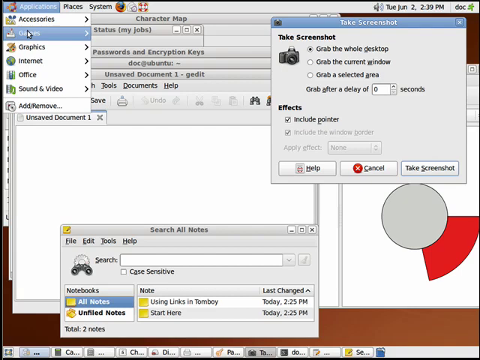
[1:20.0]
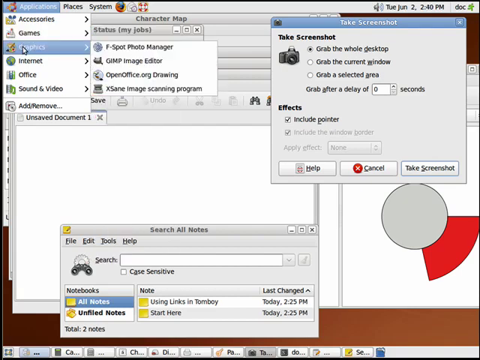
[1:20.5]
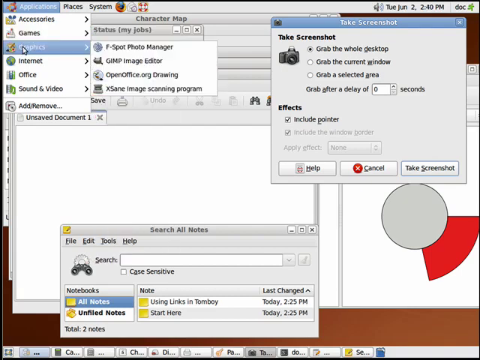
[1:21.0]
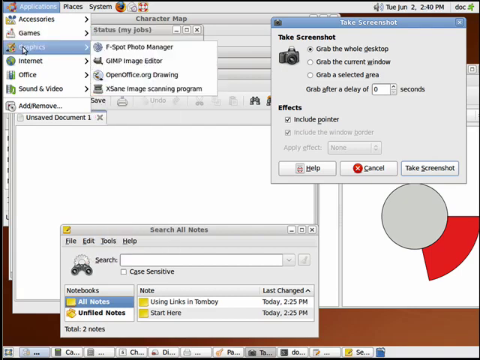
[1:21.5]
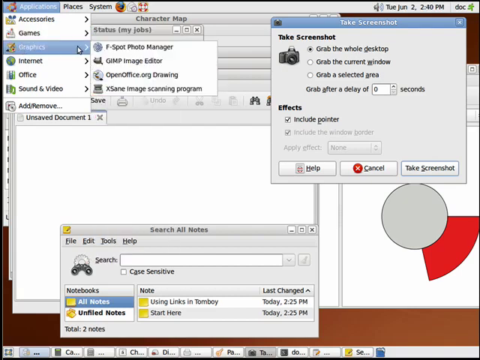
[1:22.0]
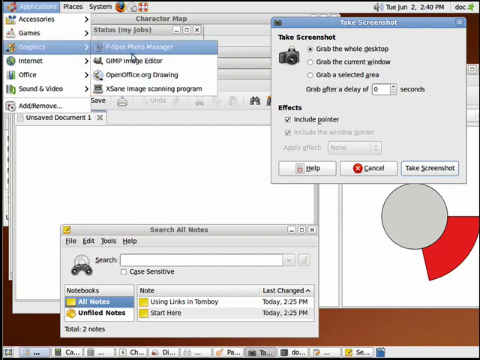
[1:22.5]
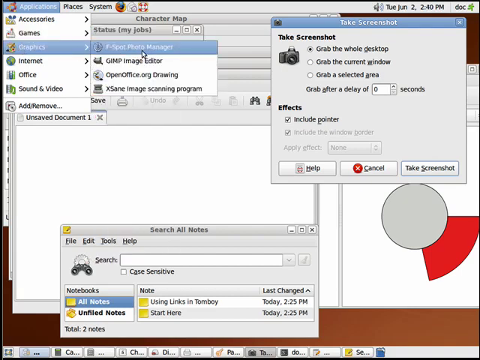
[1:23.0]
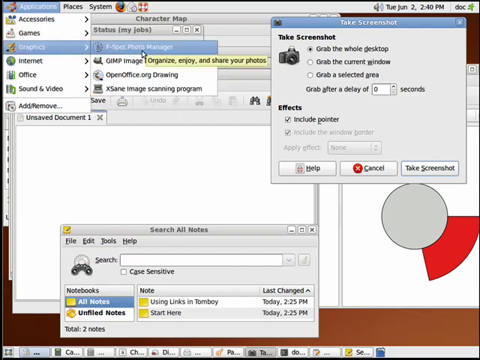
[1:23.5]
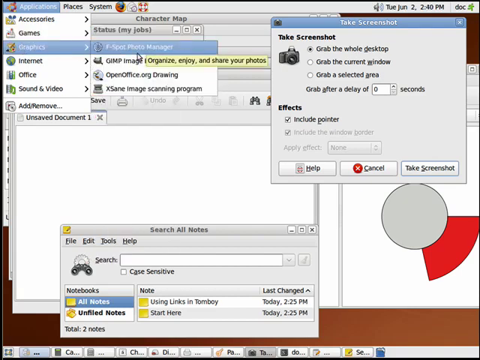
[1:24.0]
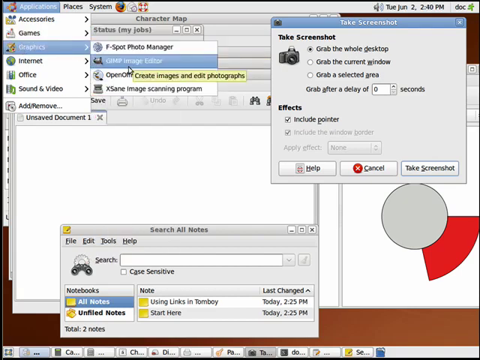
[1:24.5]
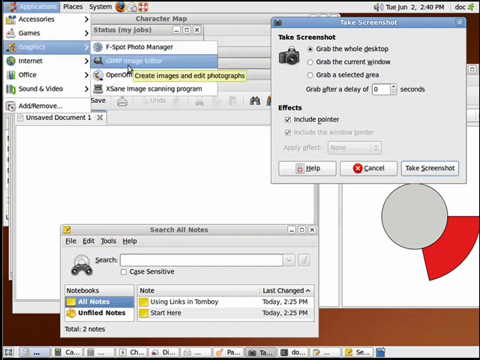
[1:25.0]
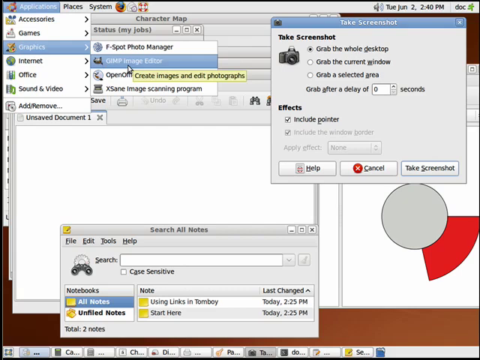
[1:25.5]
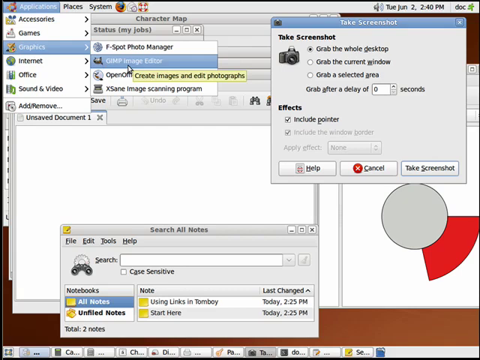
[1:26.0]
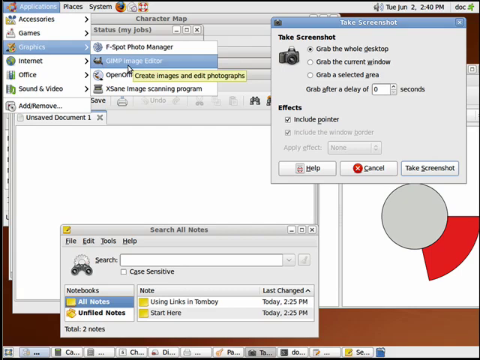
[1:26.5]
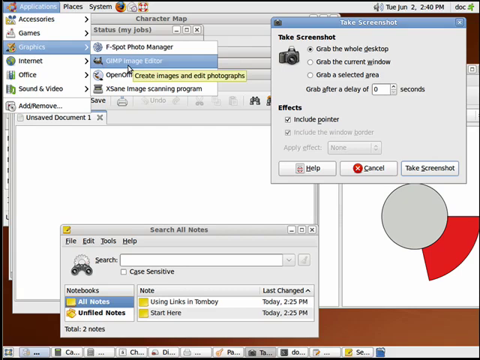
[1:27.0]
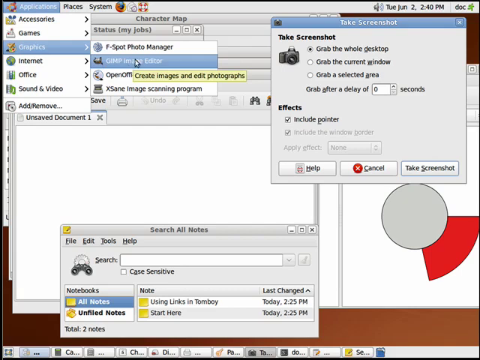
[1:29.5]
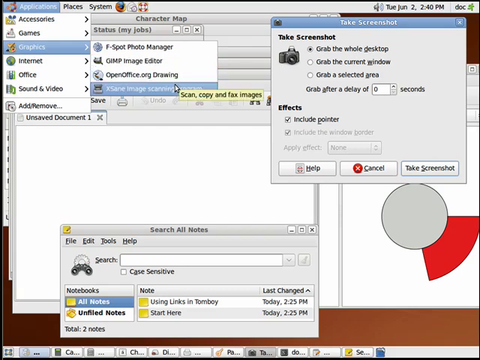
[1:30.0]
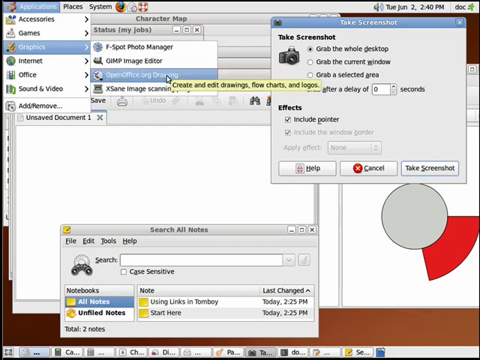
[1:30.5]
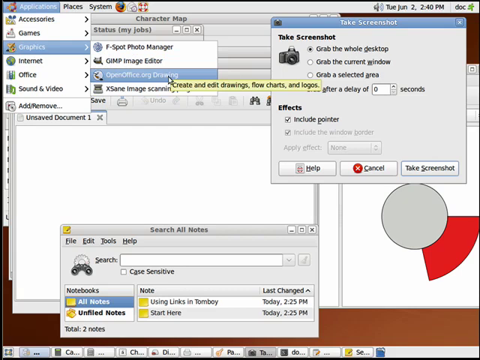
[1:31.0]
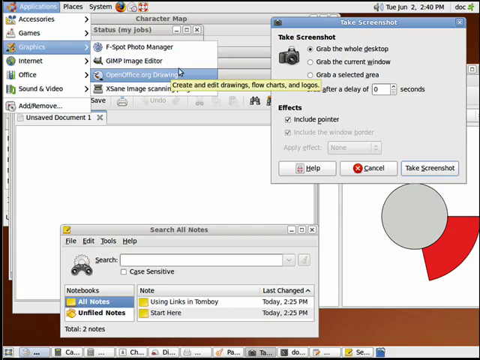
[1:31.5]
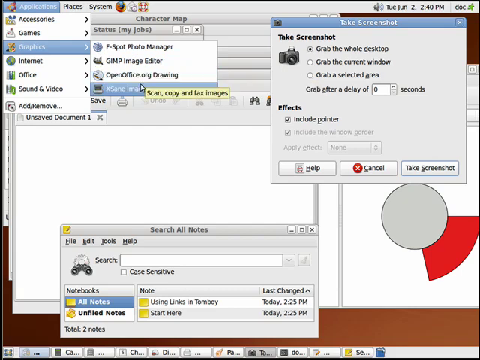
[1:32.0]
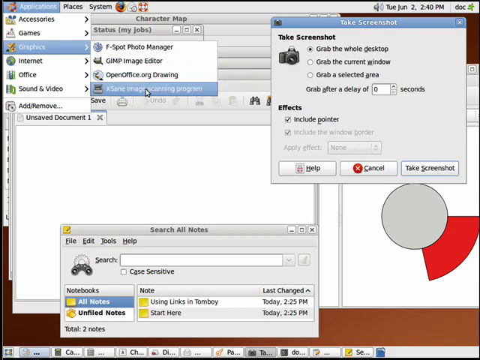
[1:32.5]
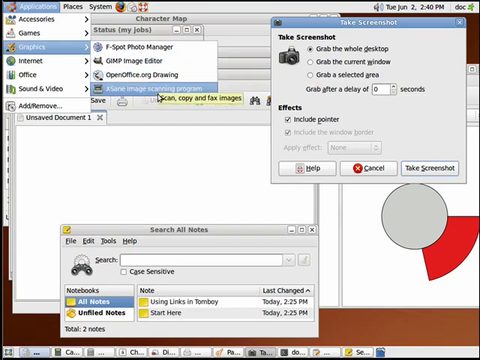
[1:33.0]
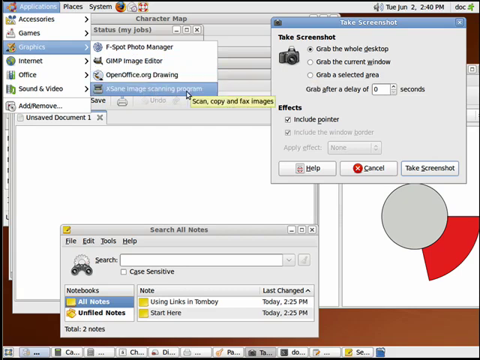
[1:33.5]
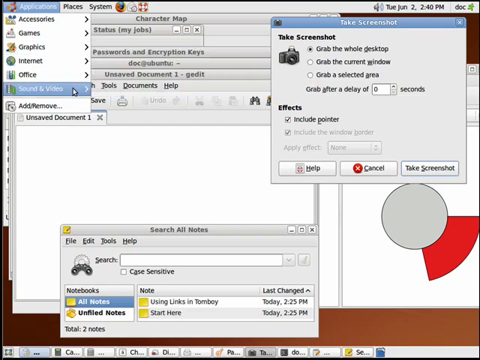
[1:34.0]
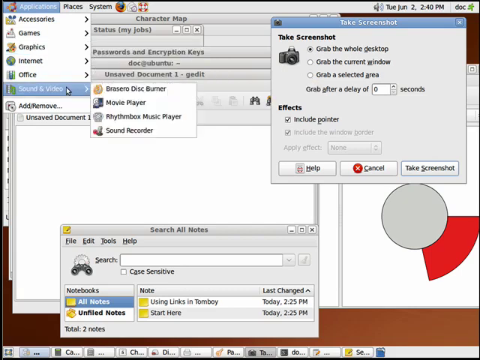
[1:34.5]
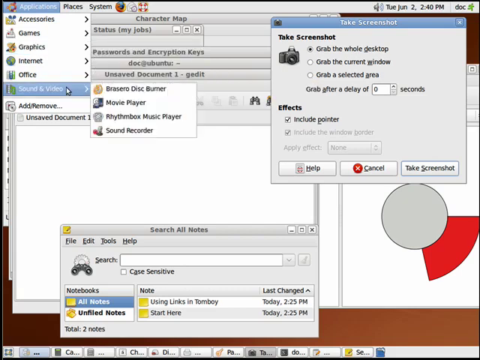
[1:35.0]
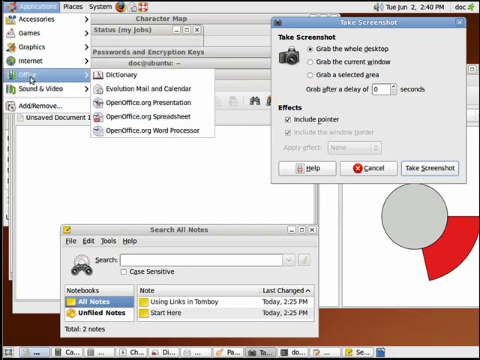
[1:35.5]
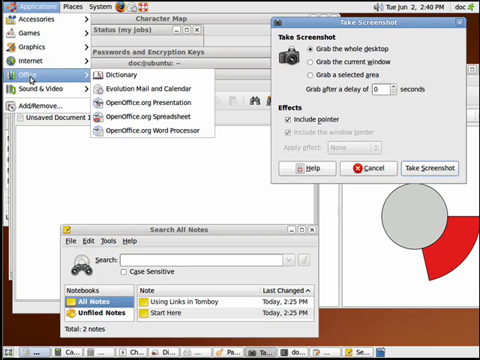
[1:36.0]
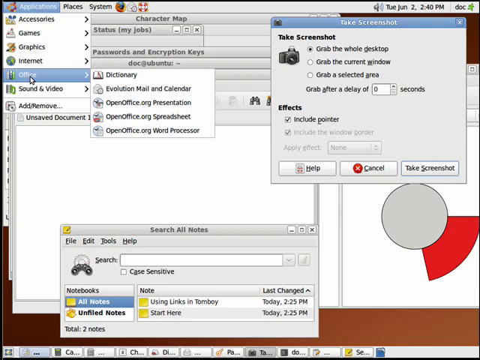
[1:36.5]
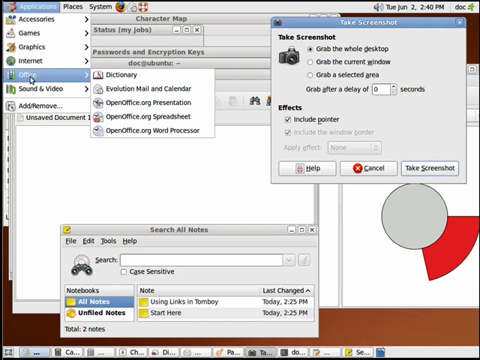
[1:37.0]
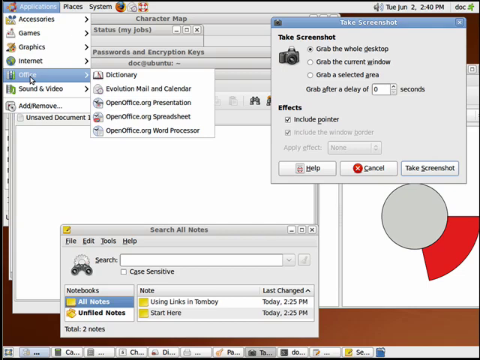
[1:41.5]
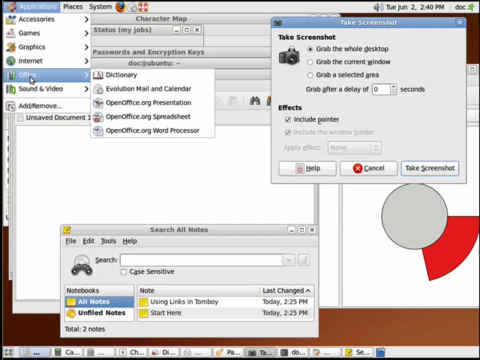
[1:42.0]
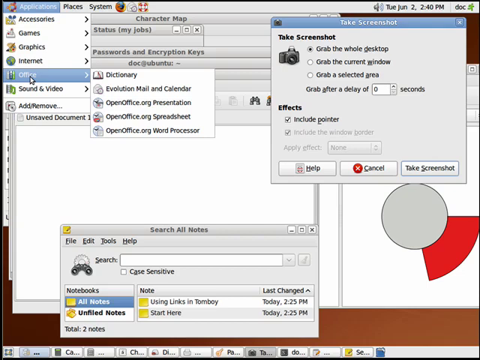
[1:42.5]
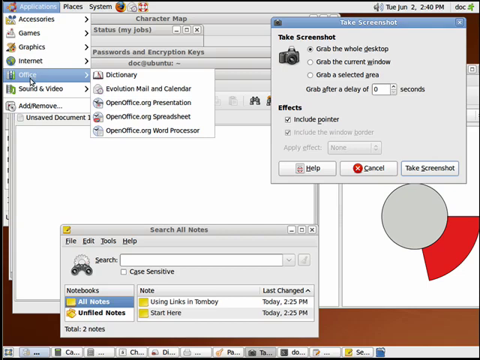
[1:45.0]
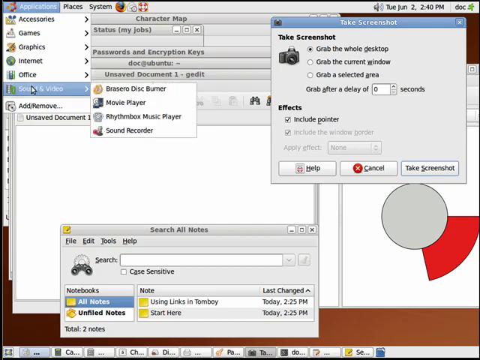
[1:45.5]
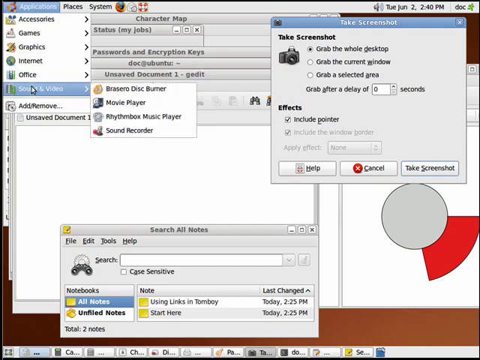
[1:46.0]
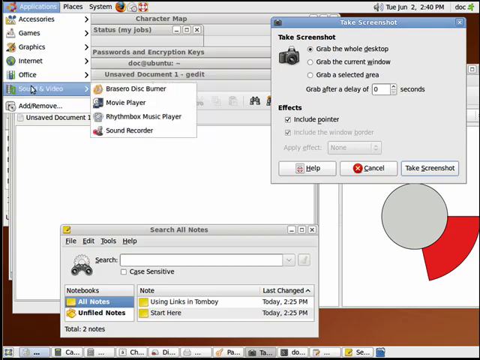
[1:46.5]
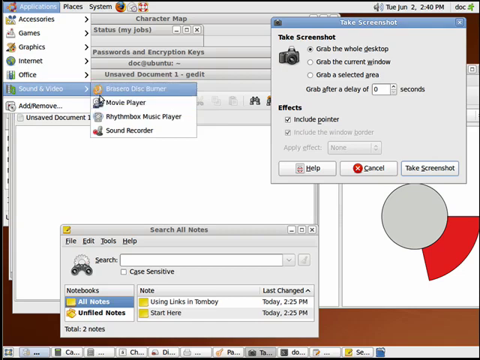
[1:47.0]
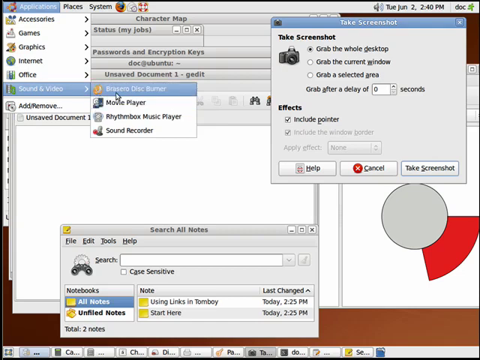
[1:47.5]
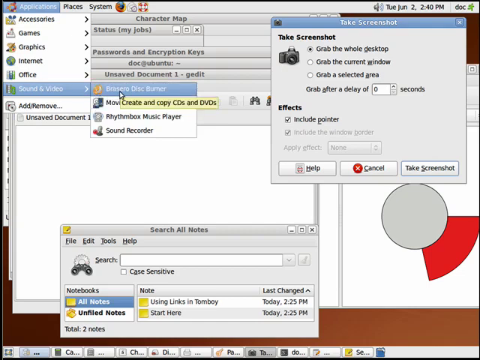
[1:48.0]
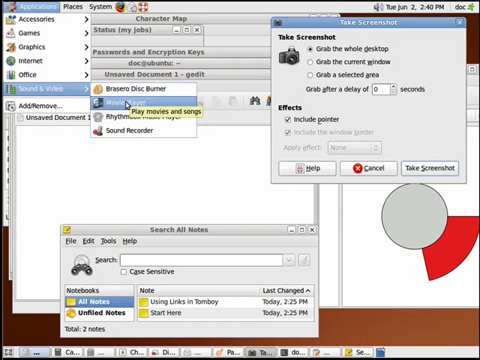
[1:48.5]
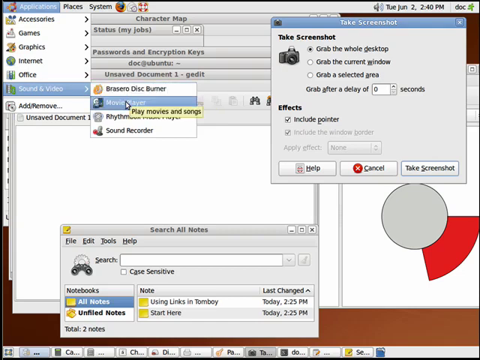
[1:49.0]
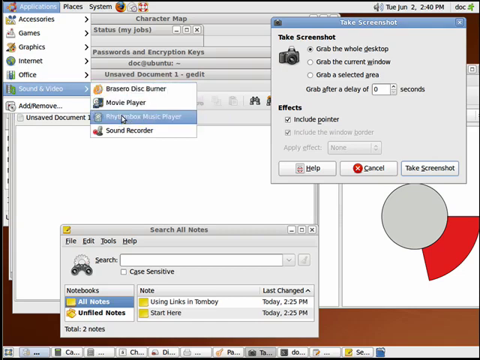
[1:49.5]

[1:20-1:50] A butterscotch tutorial, a beginner's guide to Ubuntu Linux, part 7 of 10, general software, shows the person having opened a large number of applications from the Applications menu at the top of the desktop, including Take Screenshot, Search All Notes, a character map, some graphs and sound and video. They go to Graphics and F-Spot, change their mind, go to GIMP, and change their mind again. They go to Sound and Video and then Office, where the cursor stays still for a while. Then the cursor is at Sound and Video, on Rhythm Box, but it apparently is not clicked. The screen is covered with many applications open at once, about five.